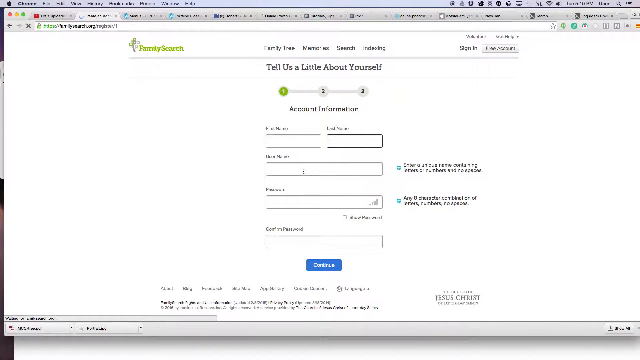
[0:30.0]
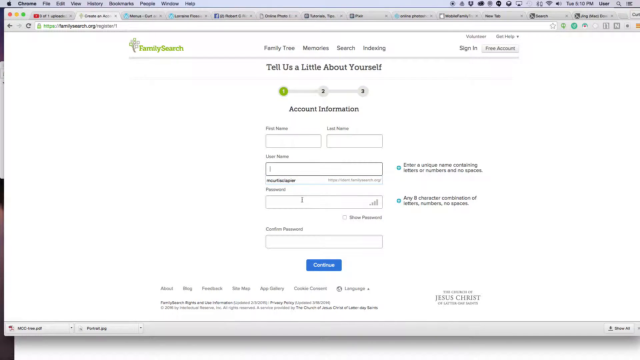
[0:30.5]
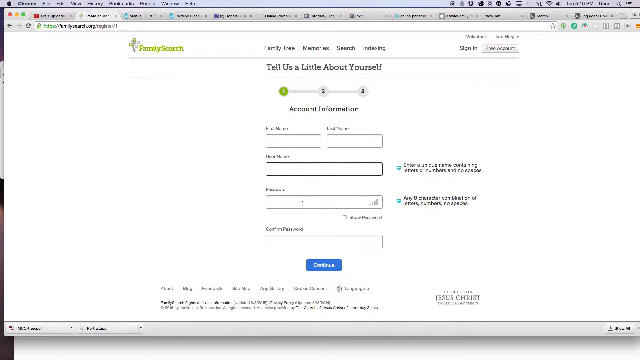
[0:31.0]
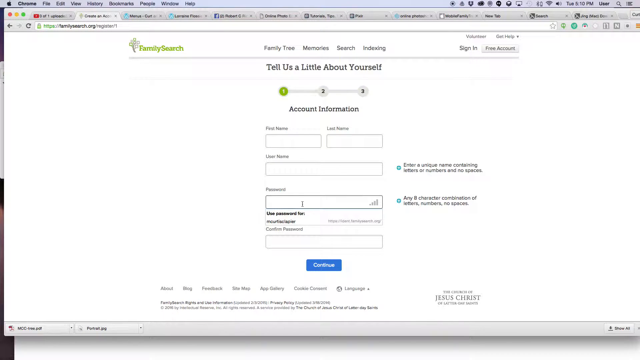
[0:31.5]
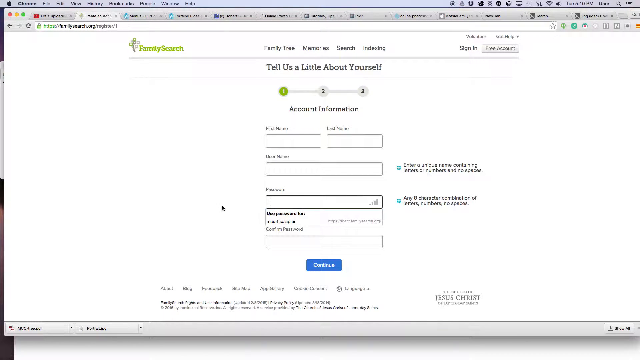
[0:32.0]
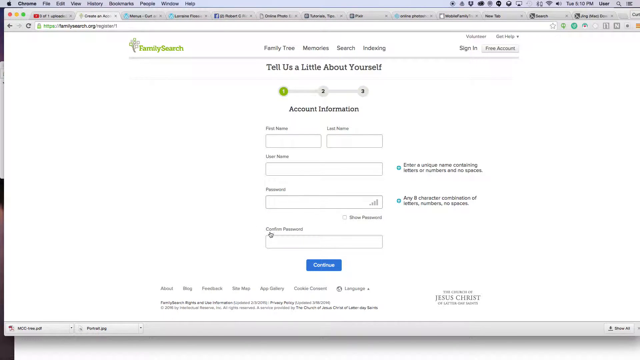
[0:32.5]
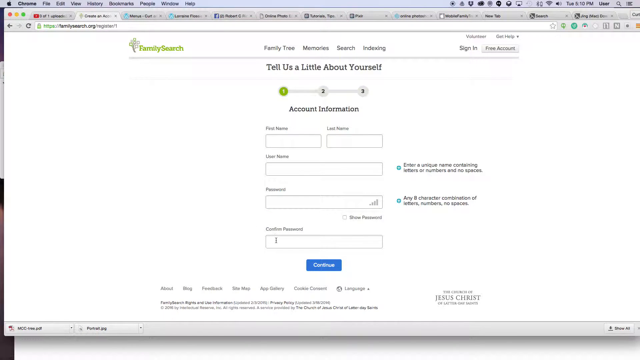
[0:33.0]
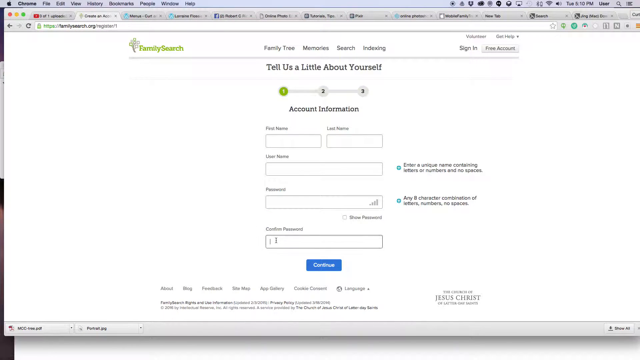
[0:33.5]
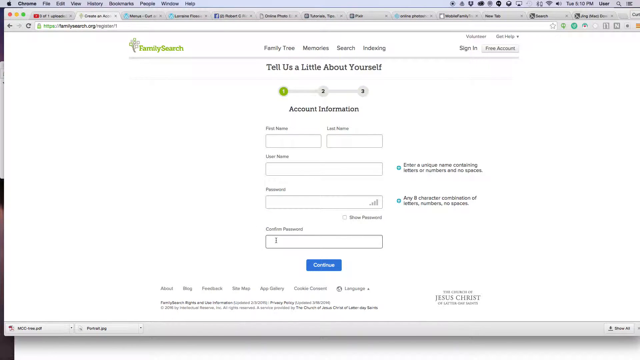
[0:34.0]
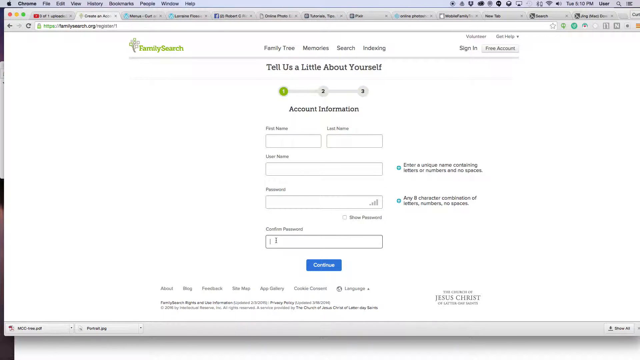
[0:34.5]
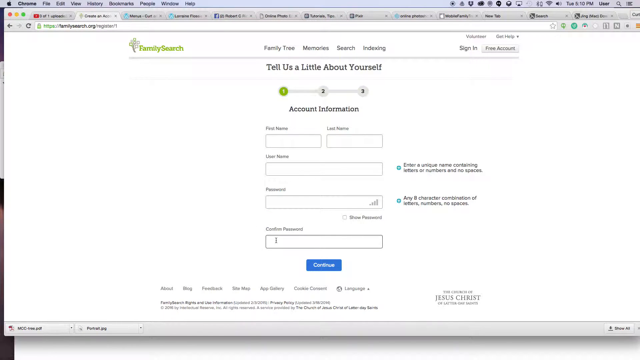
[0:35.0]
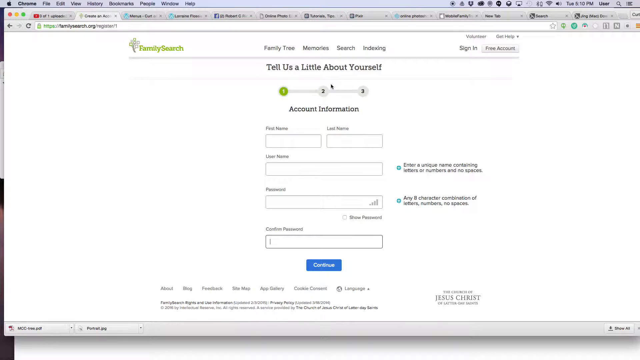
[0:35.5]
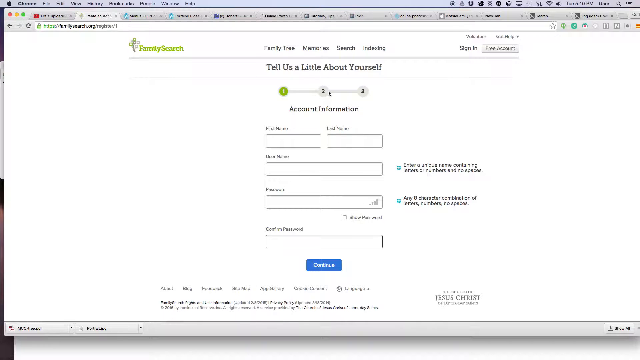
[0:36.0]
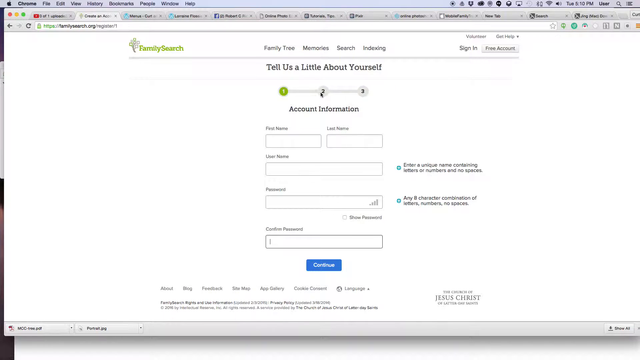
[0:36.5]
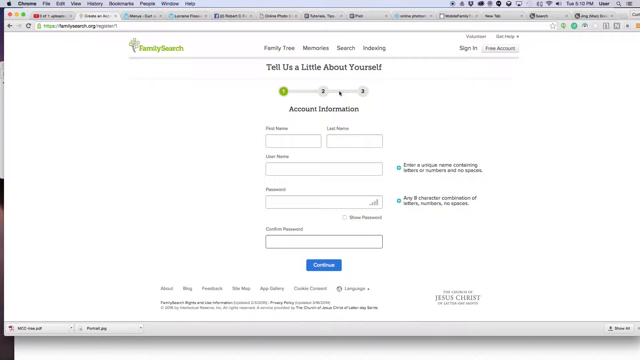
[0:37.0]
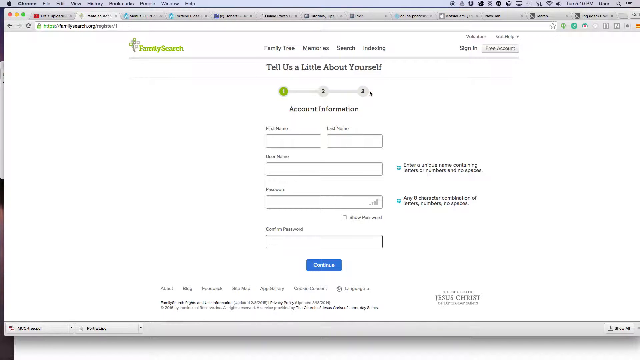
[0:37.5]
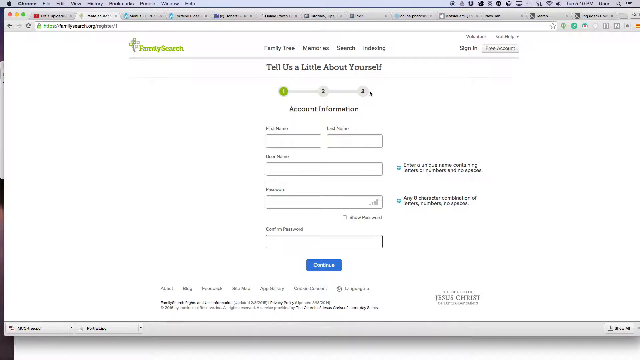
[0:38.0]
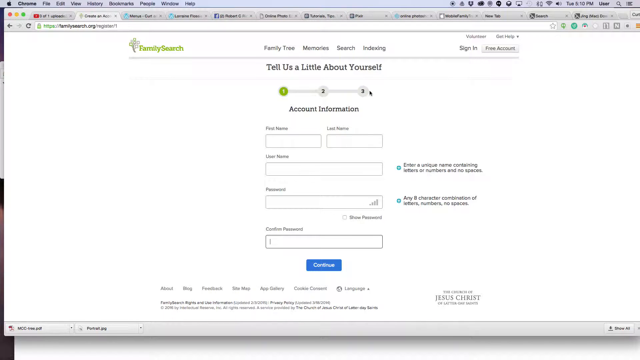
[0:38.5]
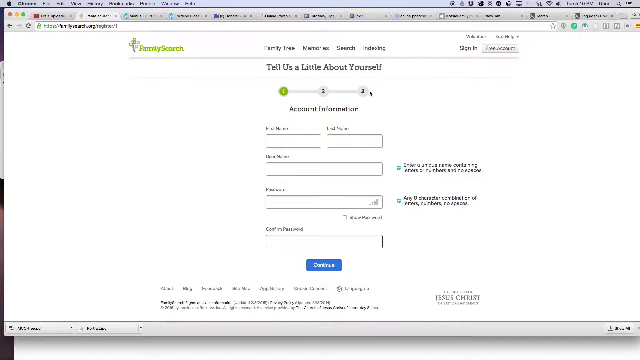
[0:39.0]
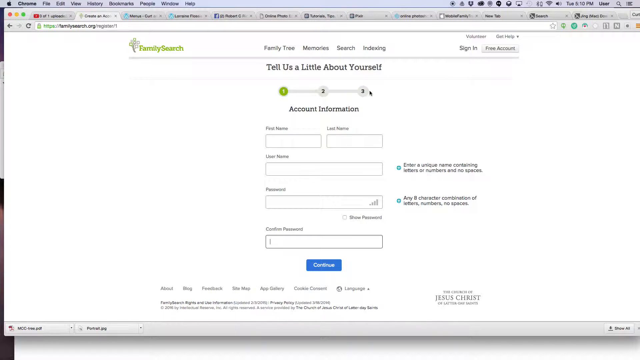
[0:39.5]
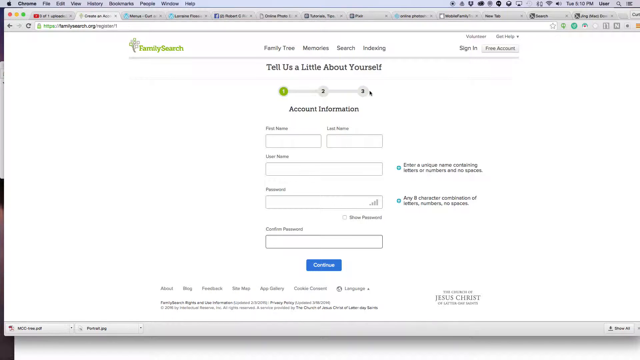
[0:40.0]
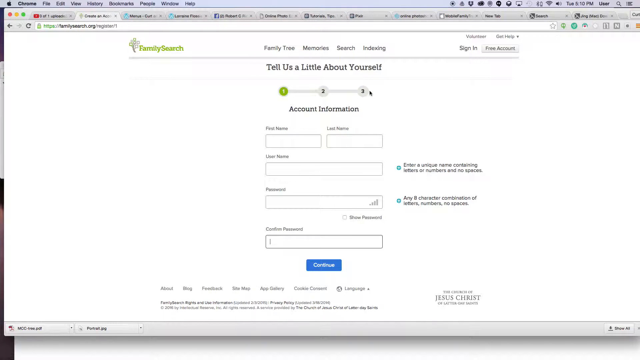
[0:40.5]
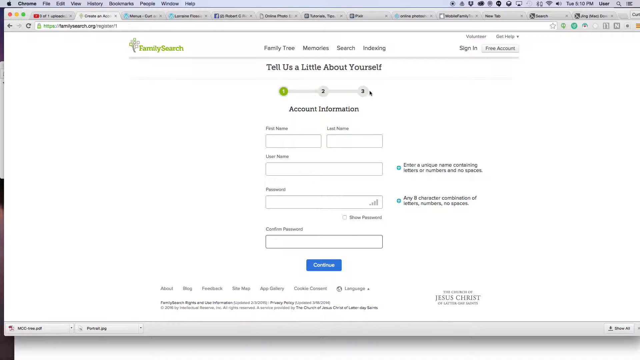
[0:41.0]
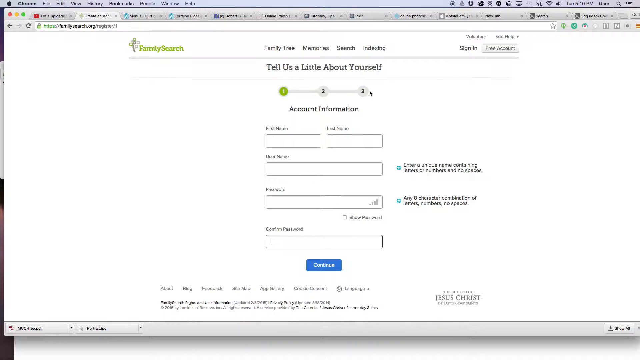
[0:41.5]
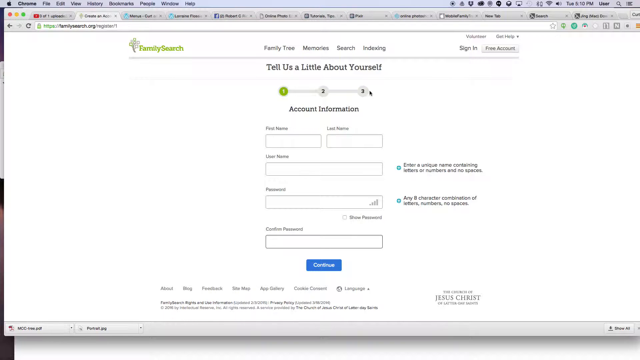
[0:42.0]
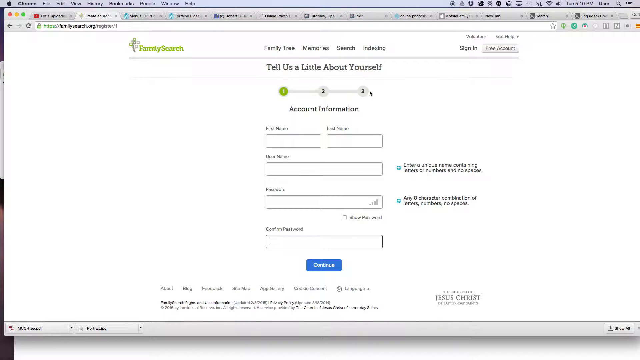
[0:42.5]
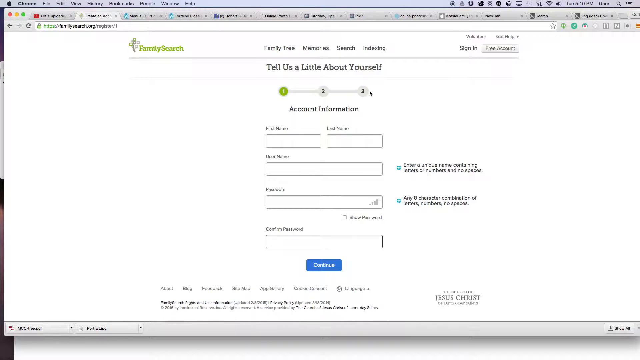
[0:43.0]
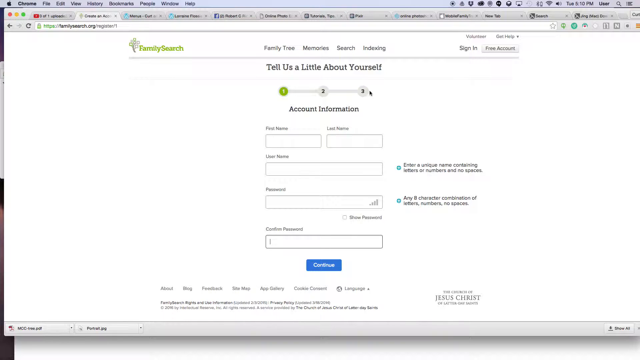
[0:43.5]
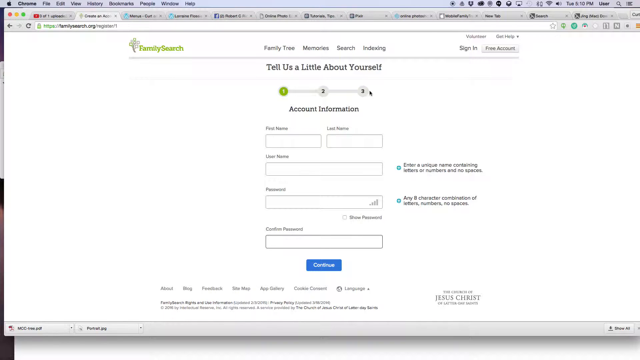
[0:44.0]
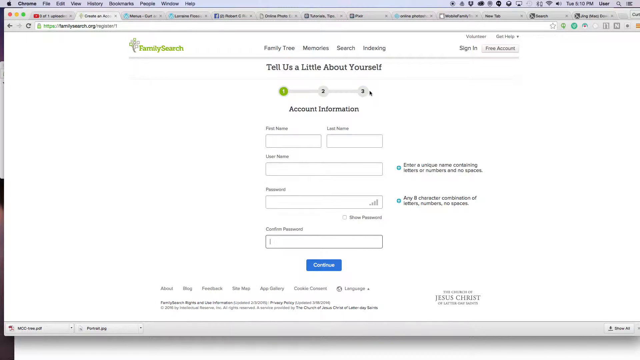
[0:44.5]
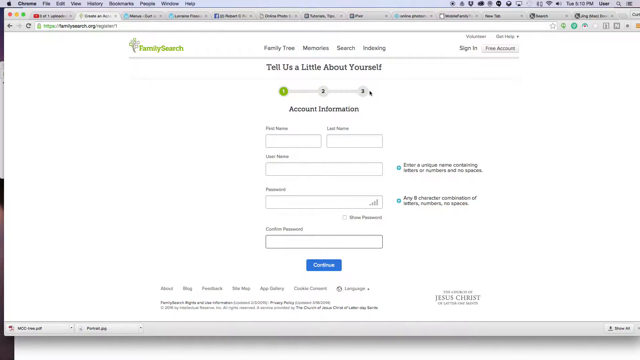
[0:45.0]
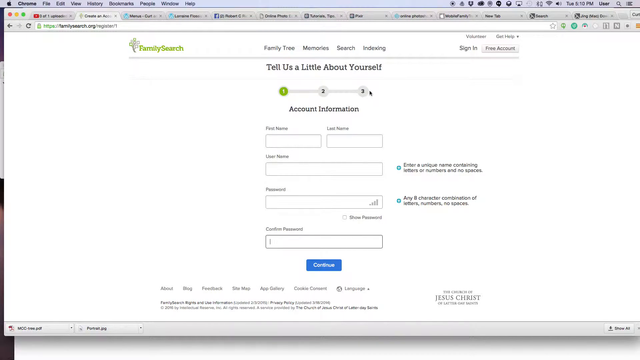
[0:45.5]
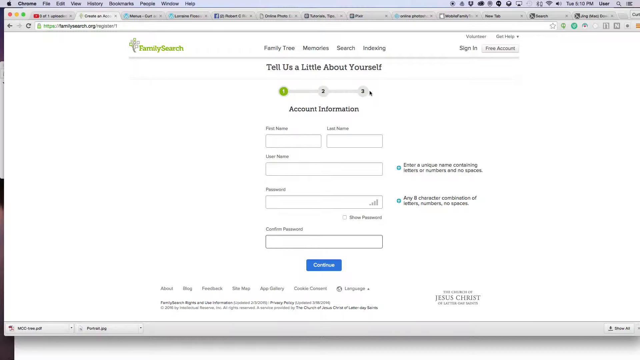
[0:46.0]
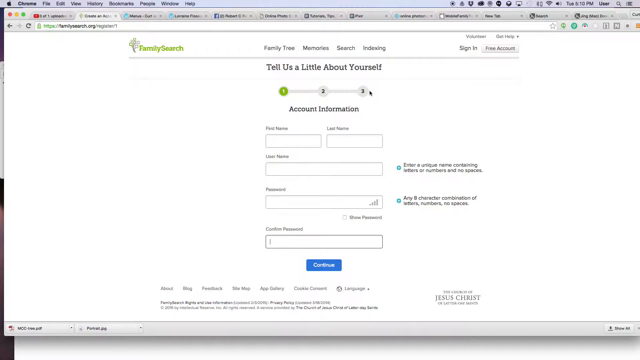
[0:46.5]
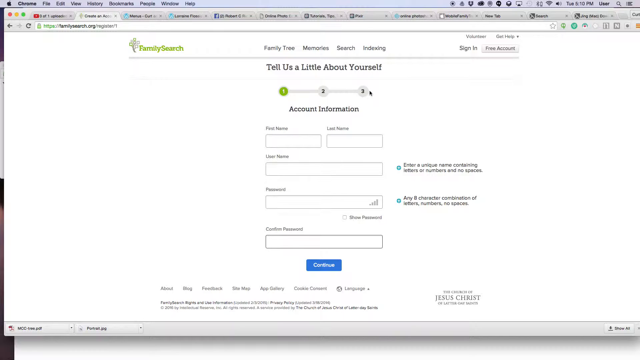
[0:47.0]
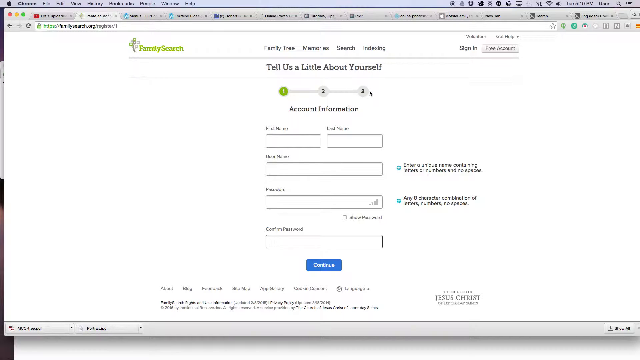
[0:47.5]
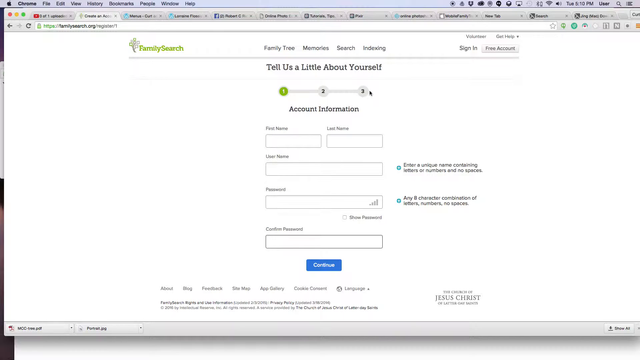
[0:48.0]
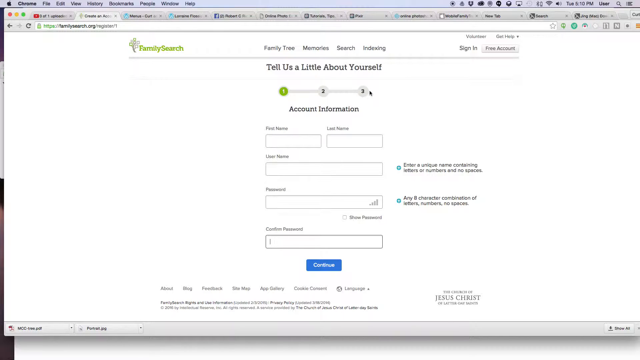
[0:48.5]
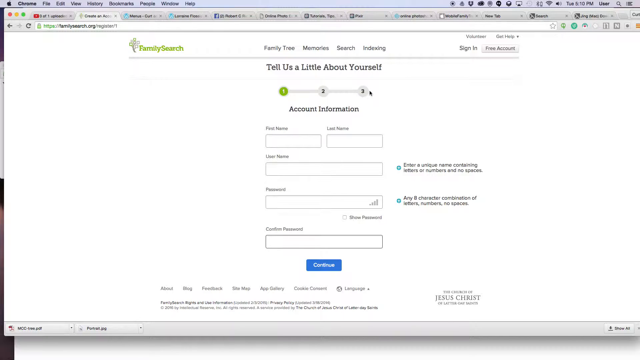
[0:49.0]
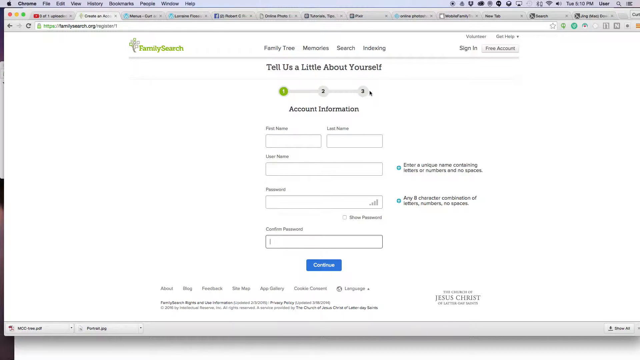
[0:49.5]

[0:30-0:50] On the "tell us a little bit about yourself" page, the user's mouse sort of moves over each of the sections being asked about: first name, last name, and below that apparently username. The text is very blurry. The last field seems to be password, also very blurry, and below that it seems to say "confirm password". The user sort of clicks on the second and third sections, but nothing happens since the first portion must be filled out first. The mouse then stops moving. On the right, a sort of light green-blue button is to the right of the password and username sections, probably to check whether the username is taken. The password section also has a signal bar indicating whether the password is strong.